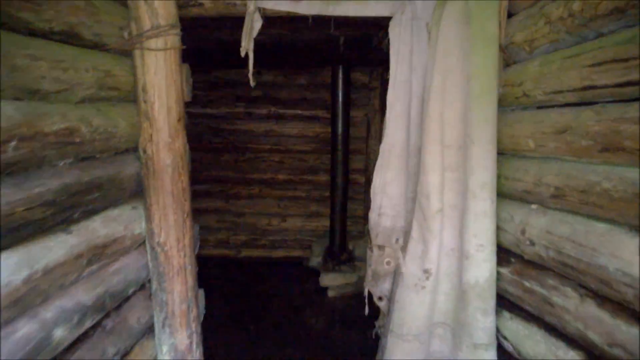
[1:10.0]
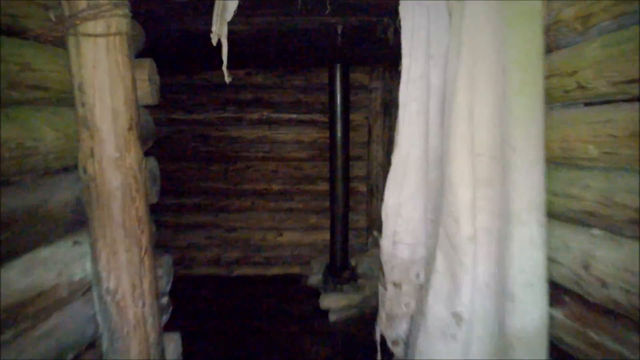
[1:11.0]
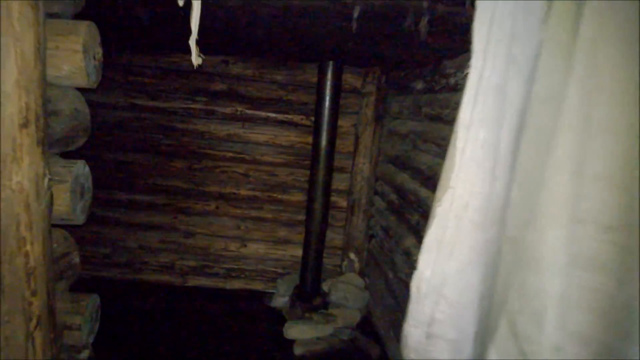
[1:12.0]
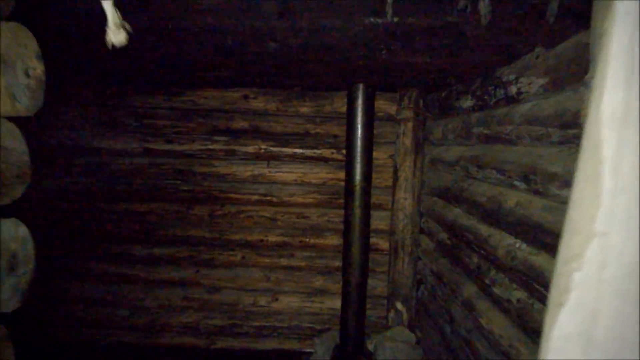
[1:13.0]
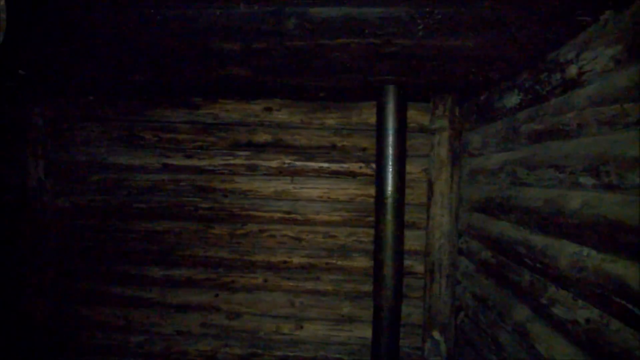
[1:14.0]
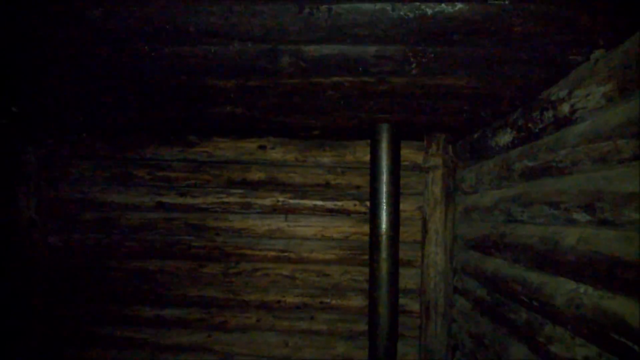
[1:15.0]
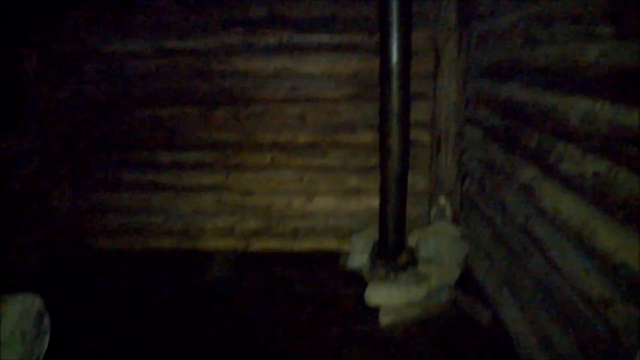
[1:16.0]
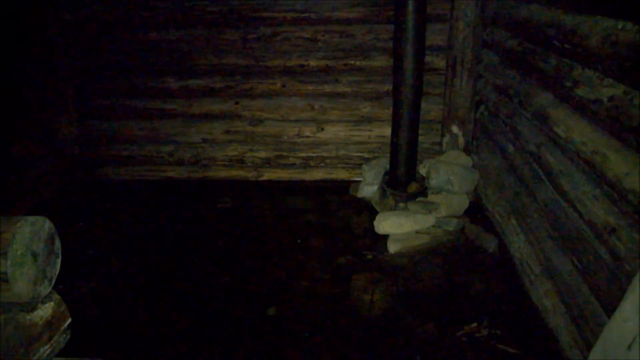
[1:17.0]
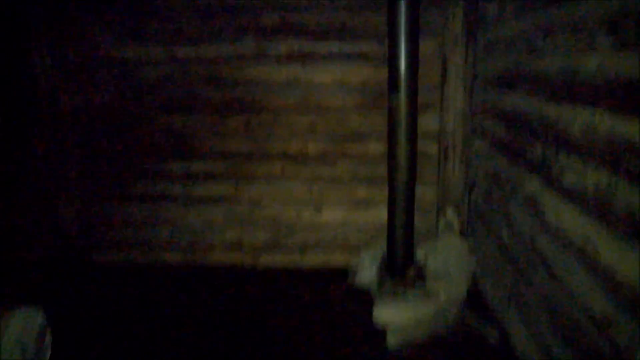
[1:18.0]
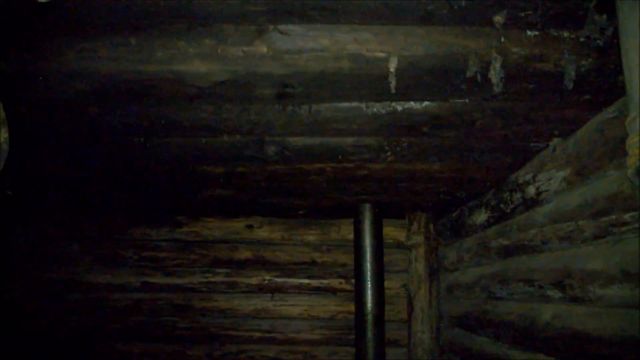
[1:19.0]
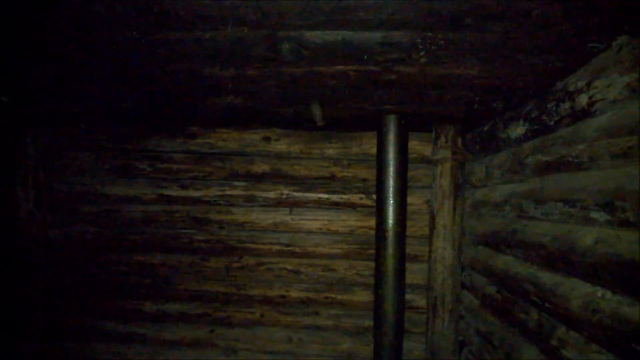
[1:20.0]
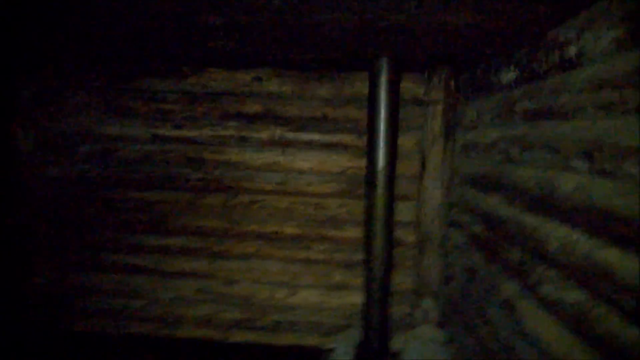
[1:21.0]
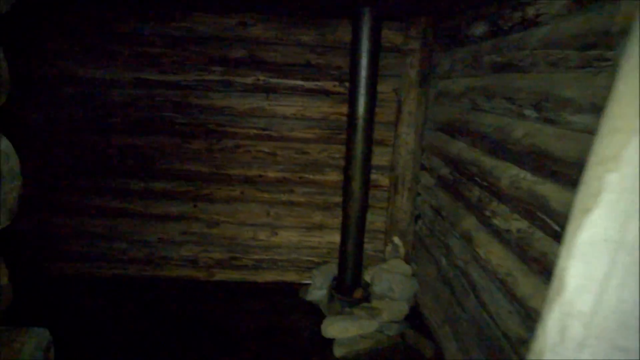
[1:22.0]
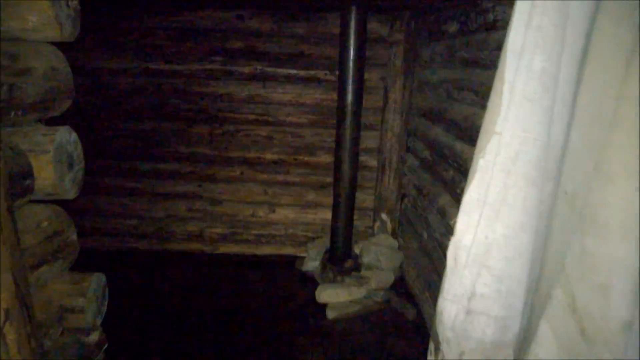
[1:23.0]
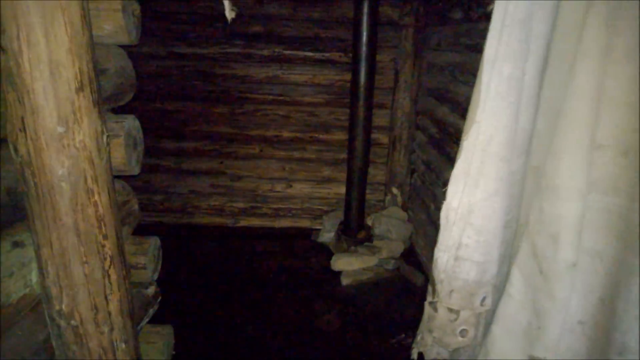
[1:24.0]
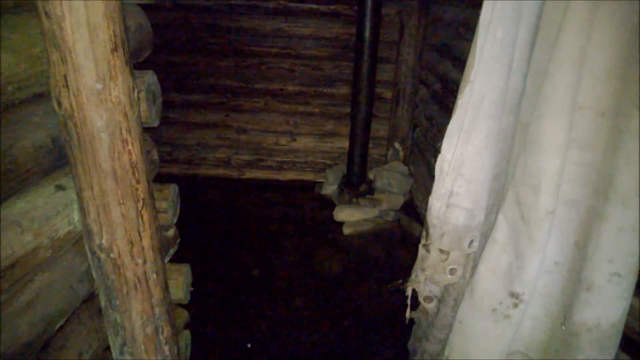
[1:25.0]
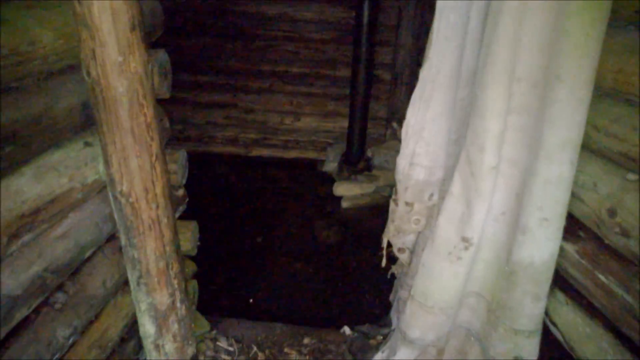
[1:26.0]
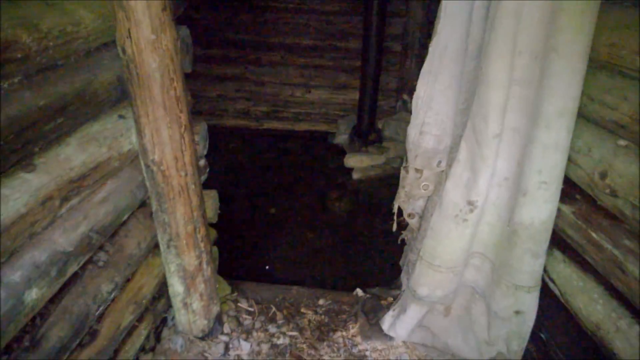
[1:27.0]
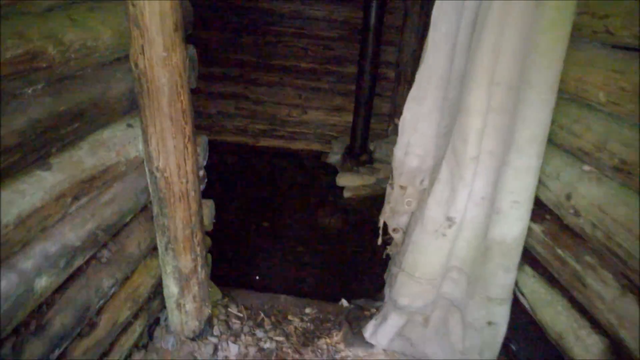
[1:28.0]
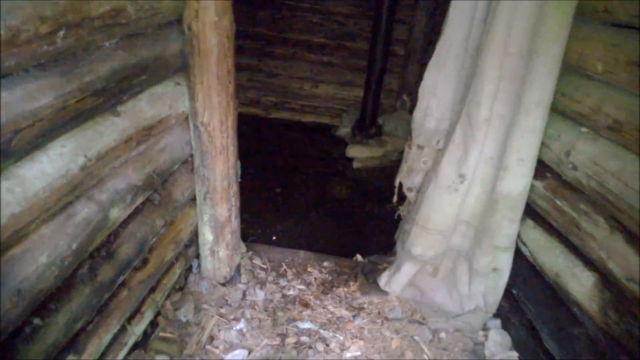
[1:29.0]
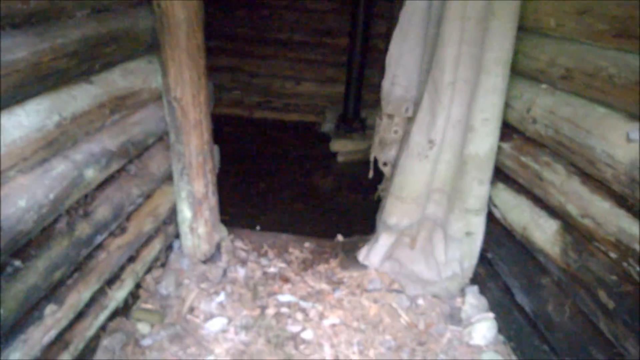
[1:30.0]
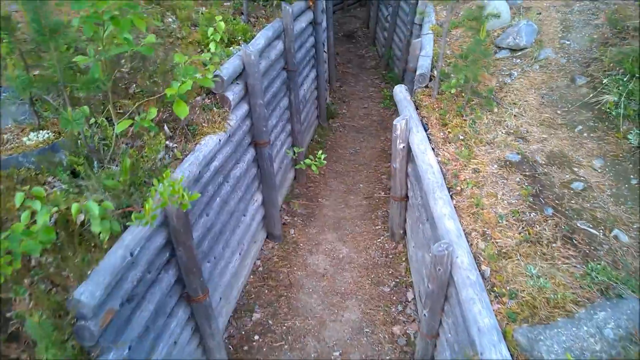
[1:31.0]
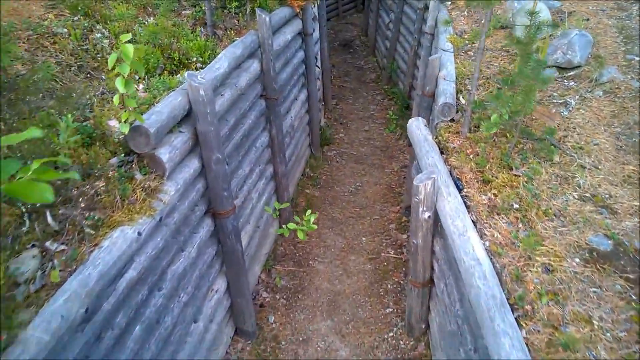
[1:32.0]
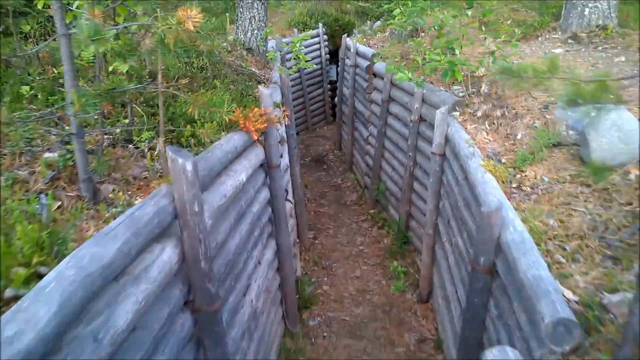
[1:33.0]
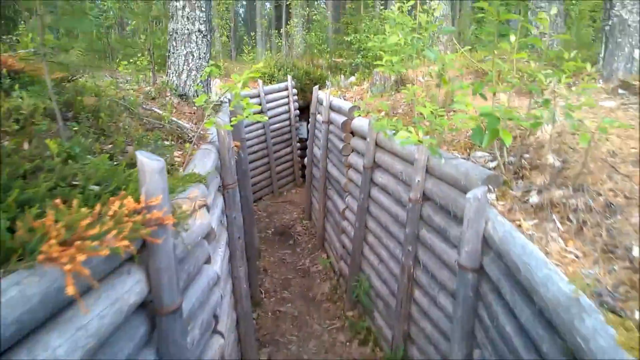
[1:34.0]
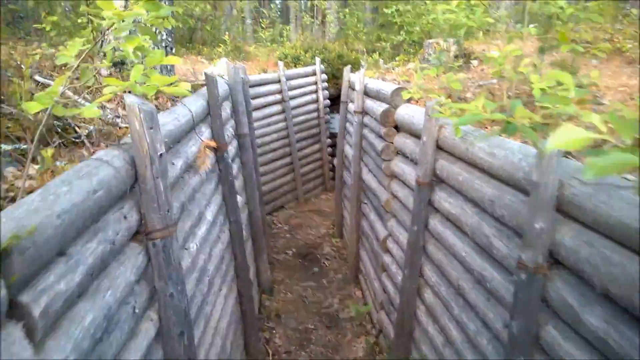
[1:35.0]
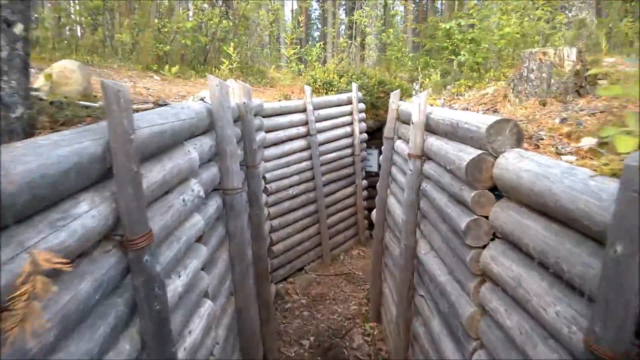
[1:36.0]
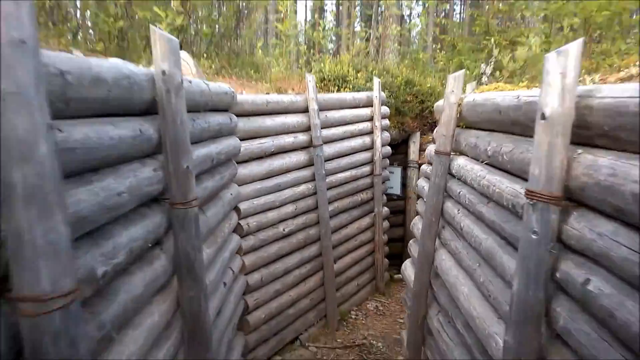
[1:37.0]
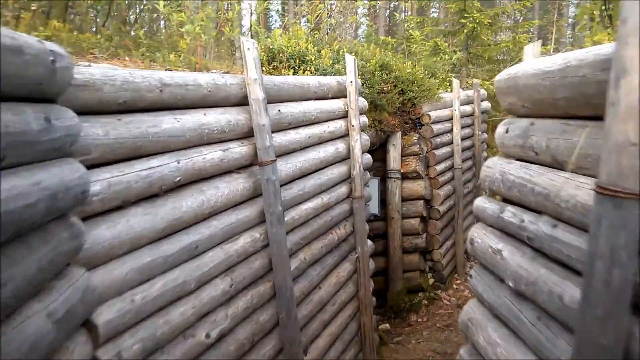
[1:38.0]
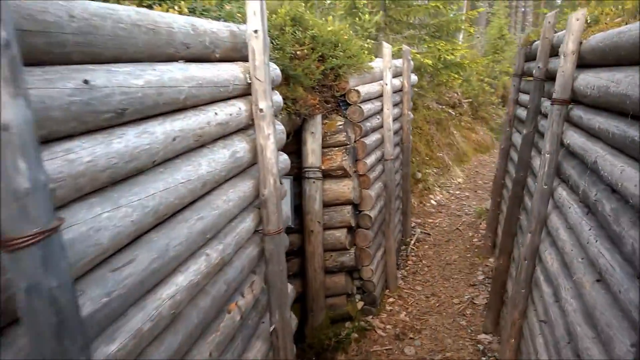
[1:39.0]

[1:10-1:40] The shelter structure named on the sign is shown. It is made of wood and is fully enclosed, with a roof that looks to be made of wood. There is what appears to be a supporting beam, possibly made of metal, though its material is unclear. The shelter has no lighting and is very dark inside, and it looks quite damp and miserable. The camera does not go fully into the shelter, so its size is unclear. The camera then cuts back into the trench, with the perspective of a person walking through it.